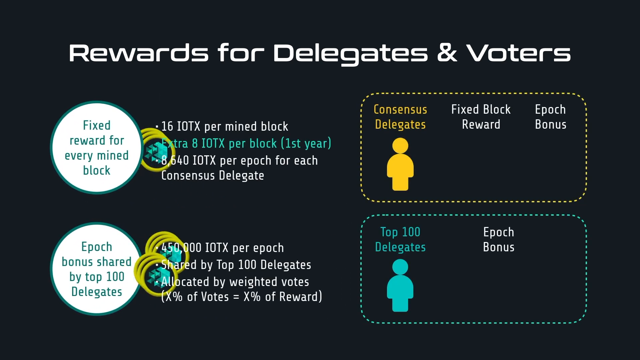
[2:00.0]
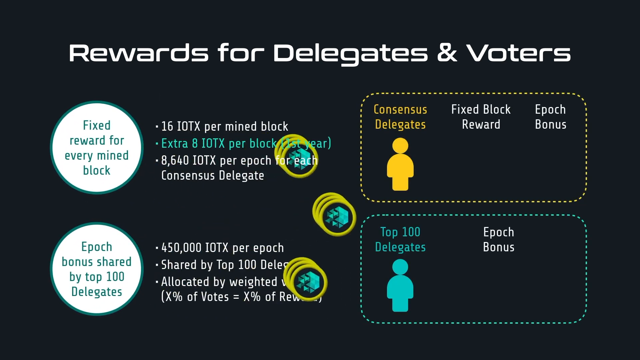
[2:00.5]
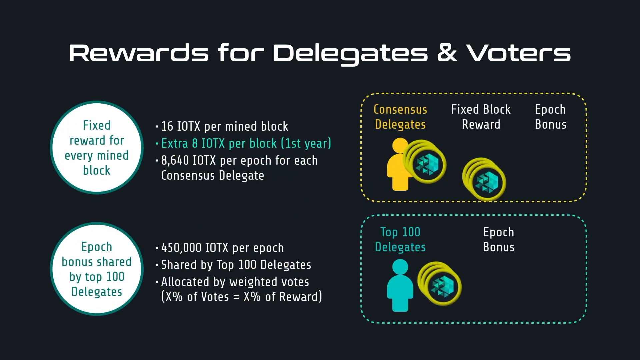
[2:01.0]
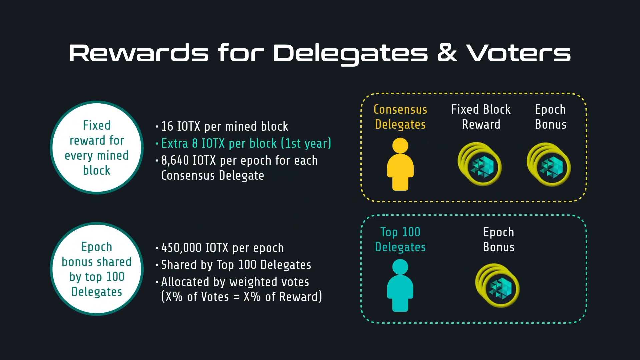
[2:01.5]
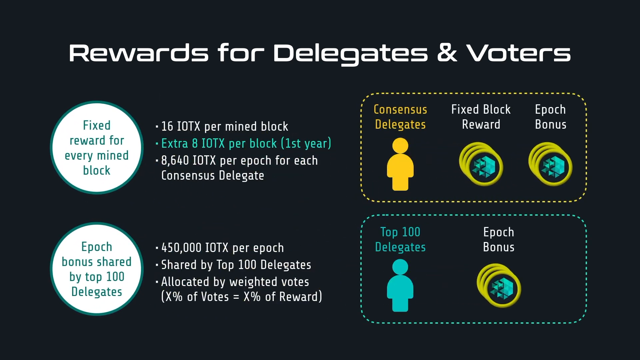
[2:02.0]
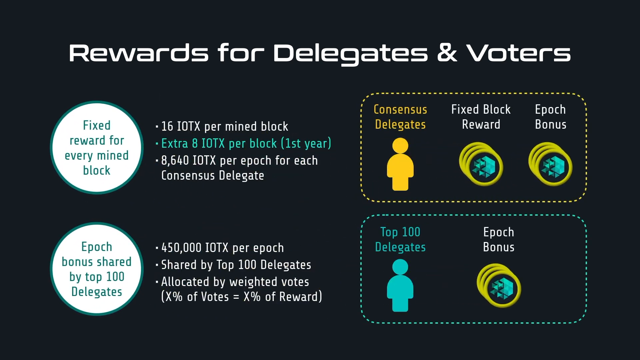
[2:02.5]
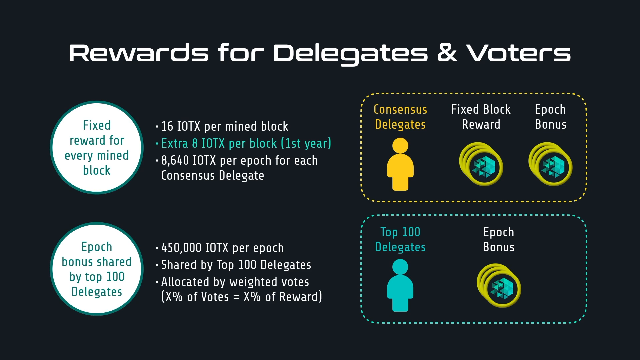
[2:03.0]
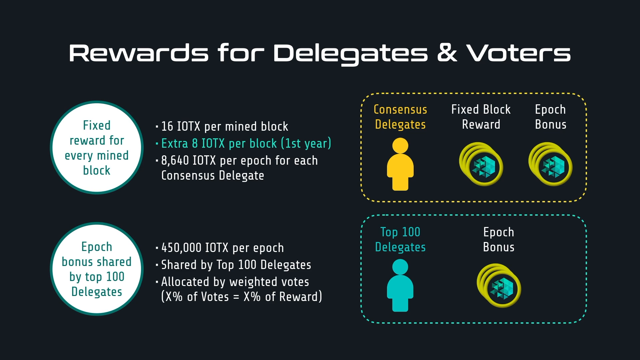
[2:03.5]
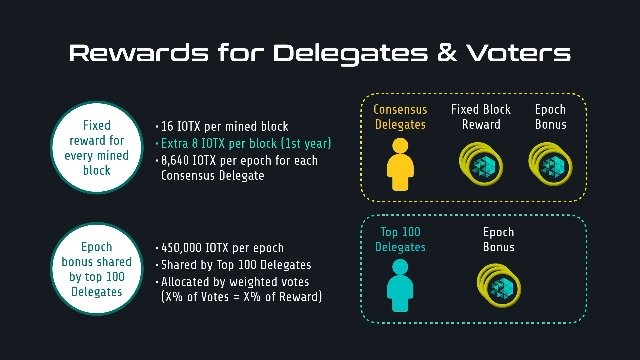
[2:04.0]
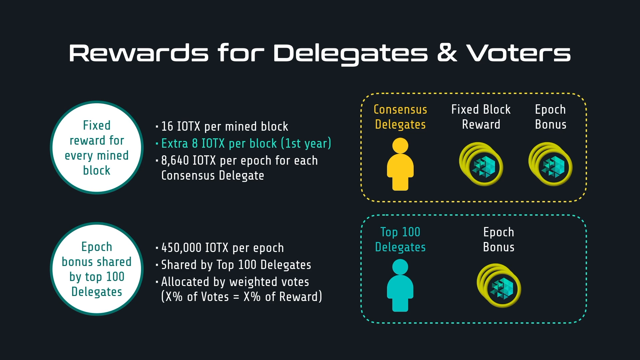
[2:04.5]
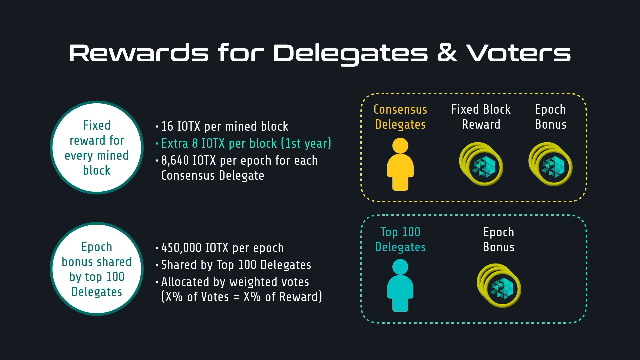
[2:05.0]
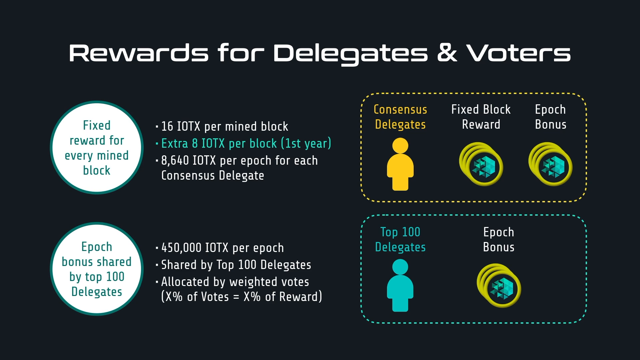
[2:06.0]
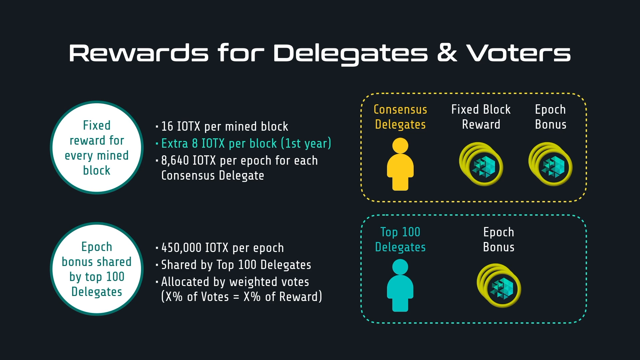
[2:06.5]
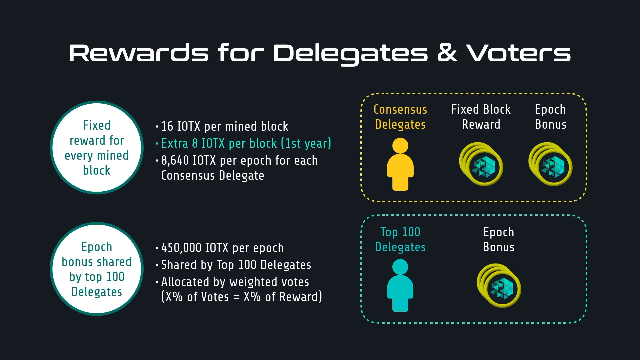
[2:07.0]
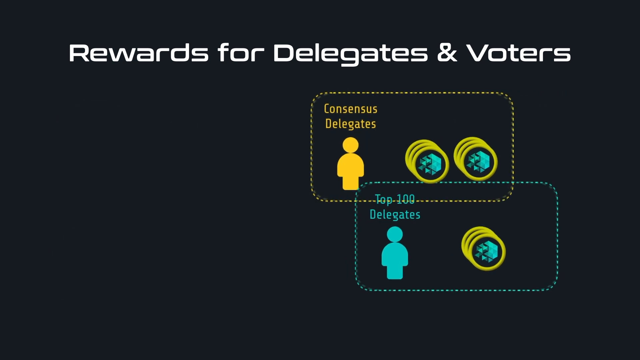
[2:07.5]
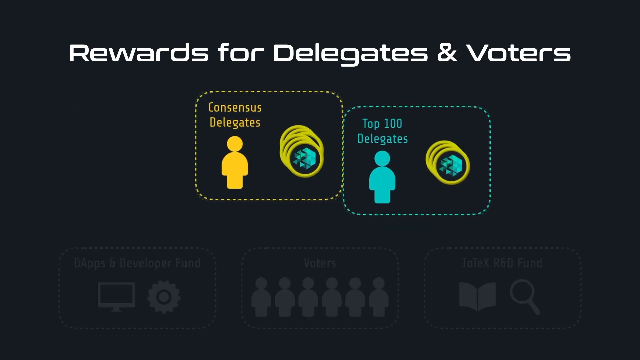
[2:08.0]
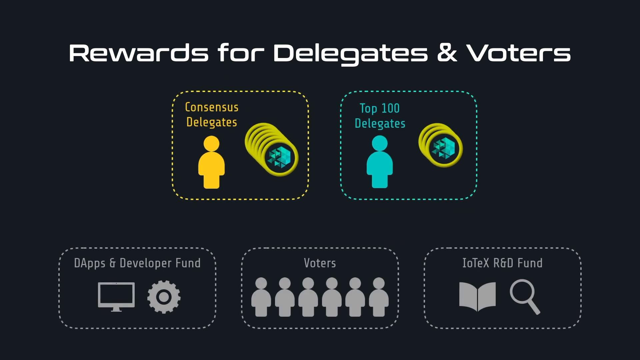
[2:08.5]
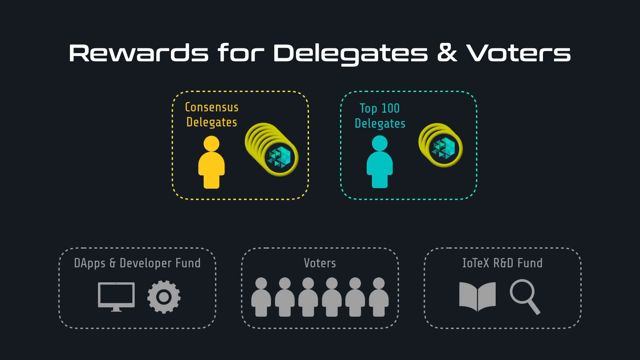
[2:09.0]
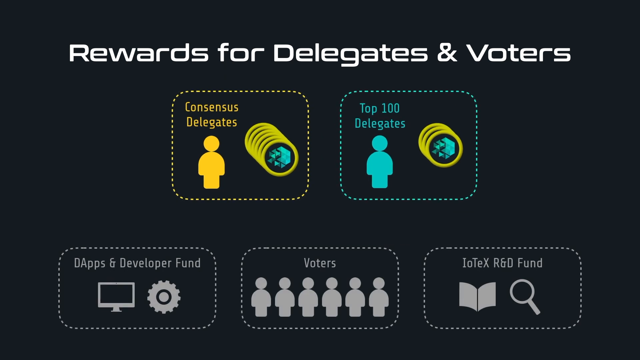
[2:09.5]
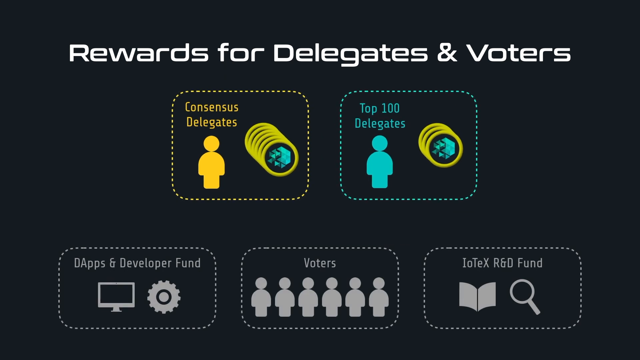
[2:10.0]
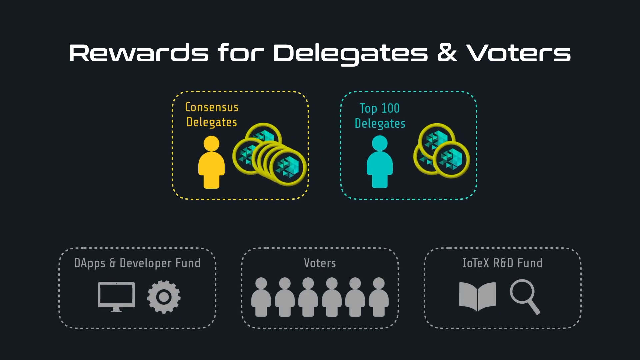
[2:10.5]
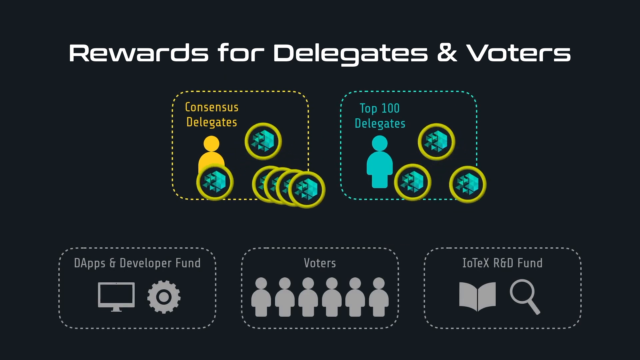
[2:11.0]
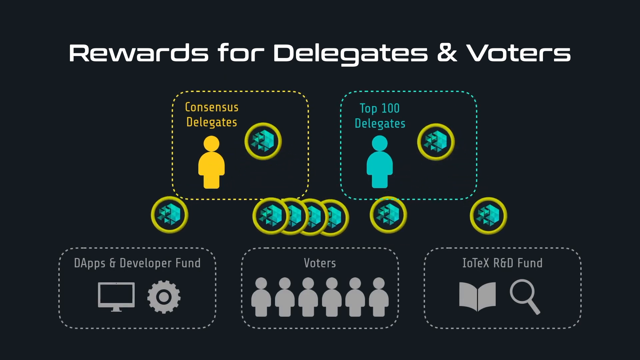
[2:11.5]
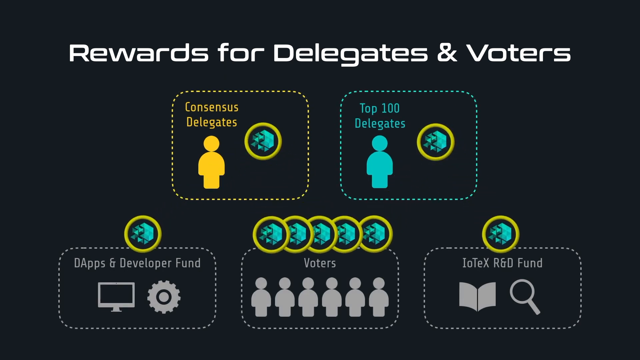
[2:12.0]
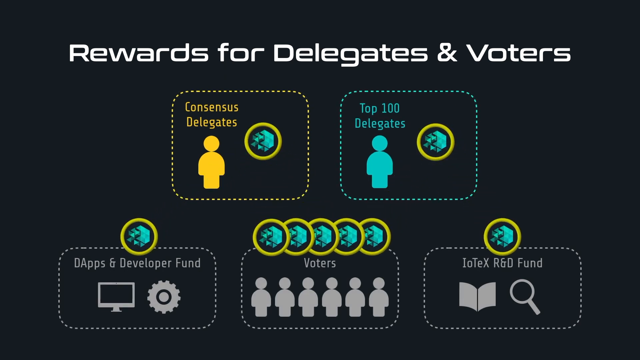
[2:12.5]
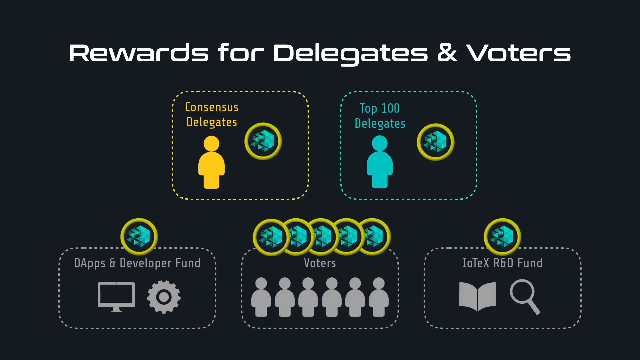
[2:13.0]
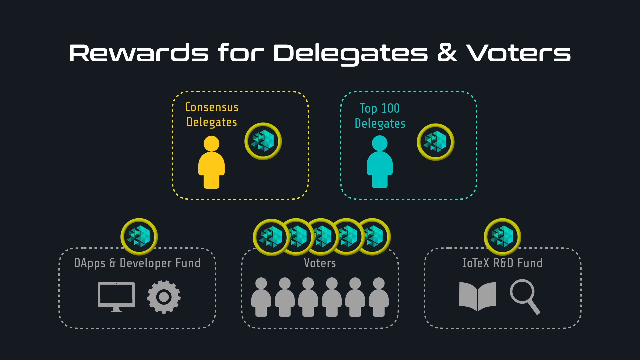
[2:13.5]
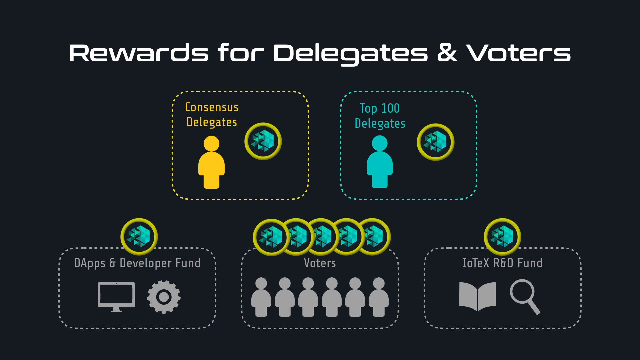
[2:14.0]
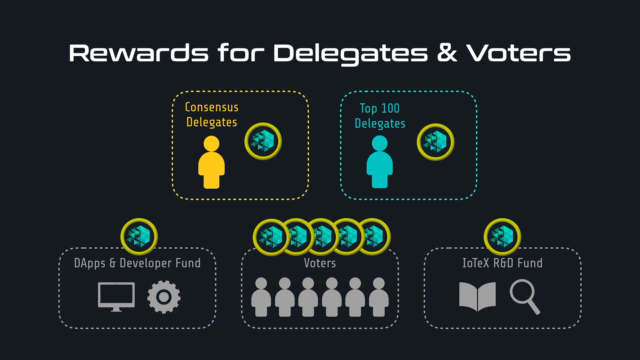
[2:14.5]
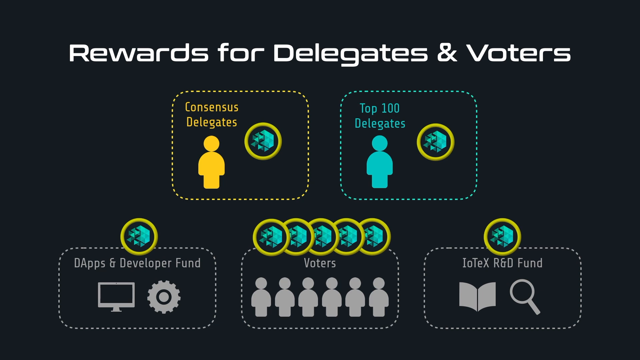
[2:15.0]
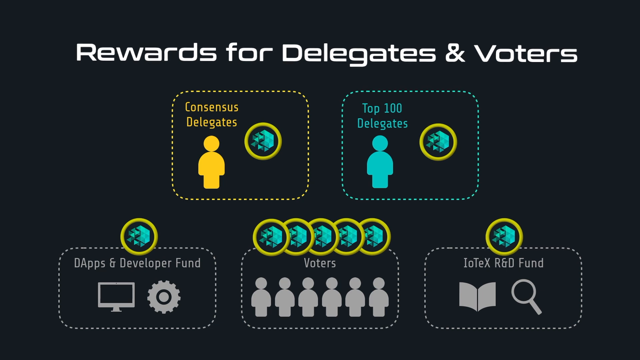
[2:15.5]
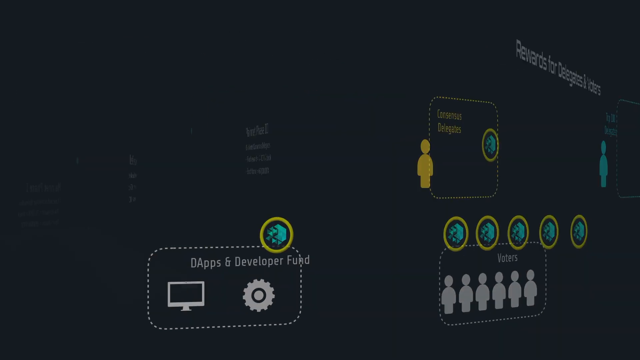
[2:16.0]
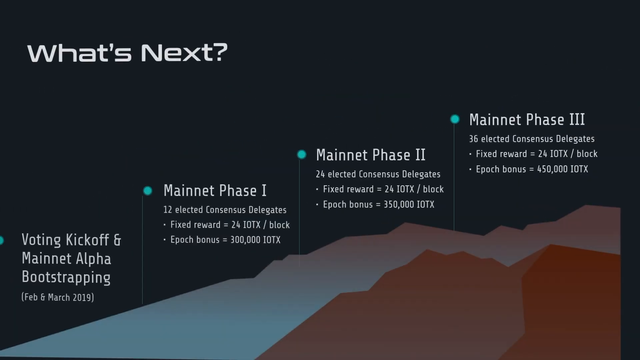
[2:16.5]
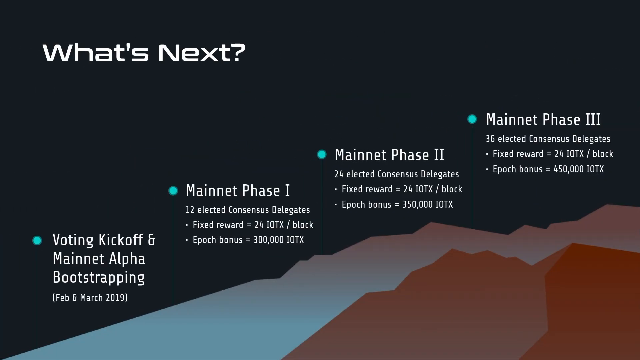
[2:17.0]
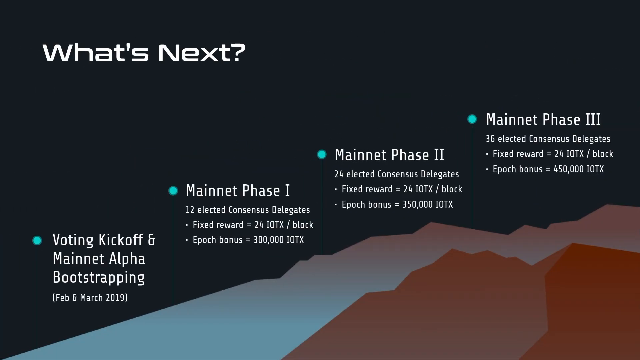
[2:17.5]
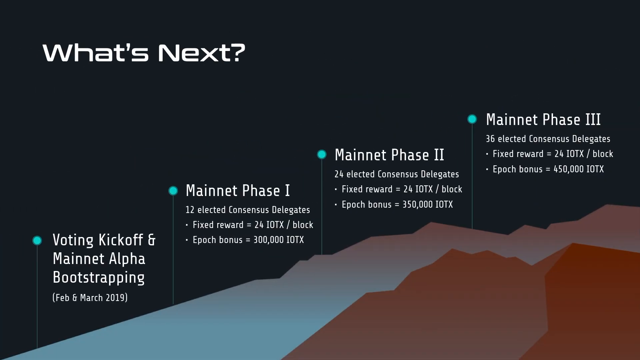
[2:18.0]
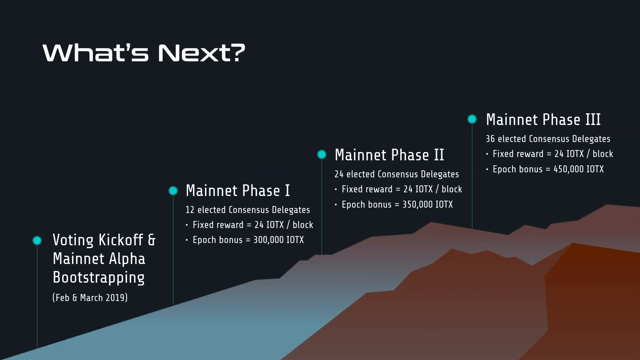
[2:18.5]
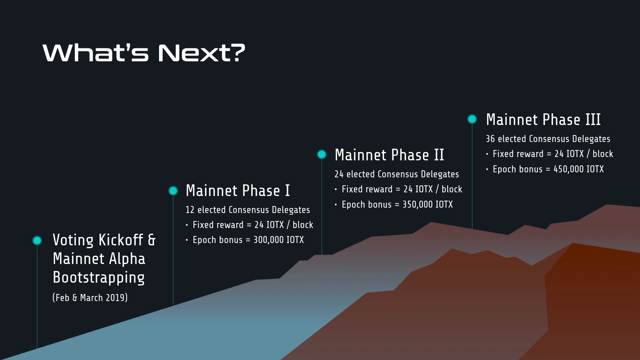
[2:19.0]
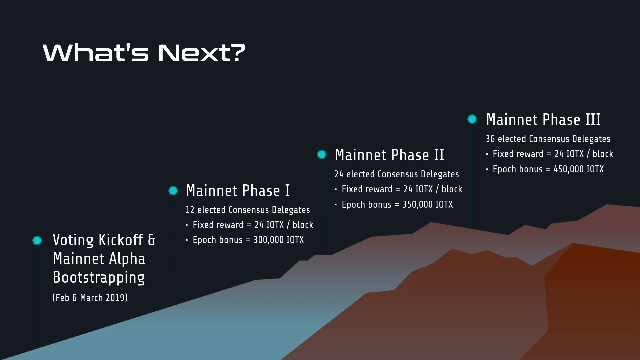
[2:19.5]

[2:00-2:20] A slide has a heading in white text reading "Rewards for Delegates and Voters". Underneath is an infographic with two circles on the left, text in the middle, and two rectangles on the right containing what look like green logos with yellow circles around them. The first box has what looks like yellow text and white text, and the box underneath it has turquoise green text and white text. The logos seem to go into the bottom of each box, and on the left side there is a yellow stickman by the top box and a turquoise green stickman by the bottom one. Another slide then shows five boxes: the top two are the same ones from the previous slide, now at the top, with more boxes at the bottom. Some of the logos from the top box go down to the bottom boxes: the one on the left gets one, the one on the right also has one, and the one in the middle has five logos.